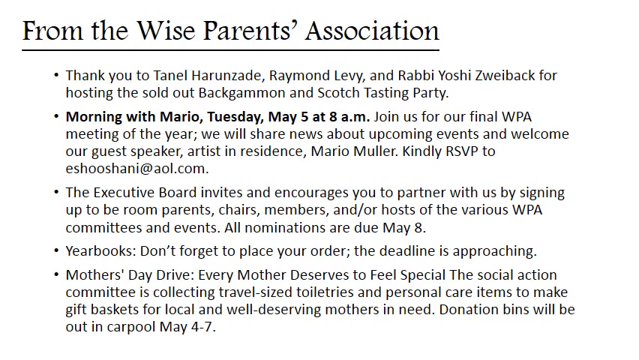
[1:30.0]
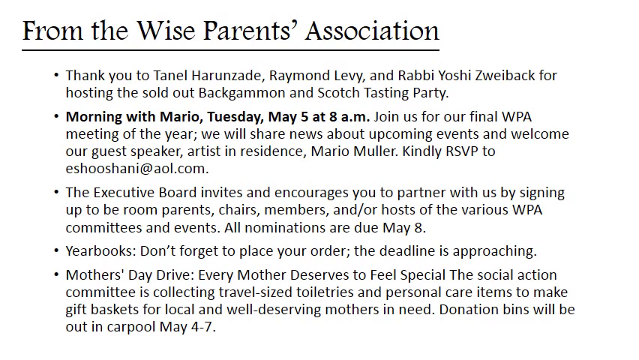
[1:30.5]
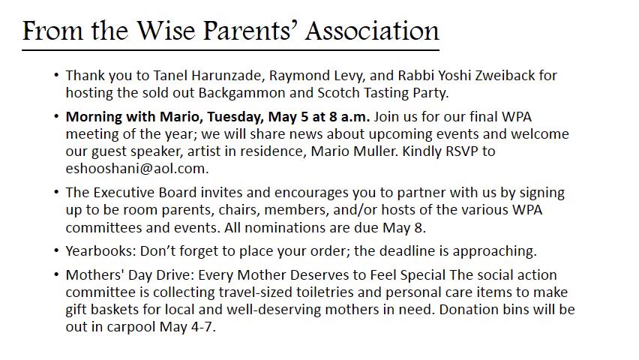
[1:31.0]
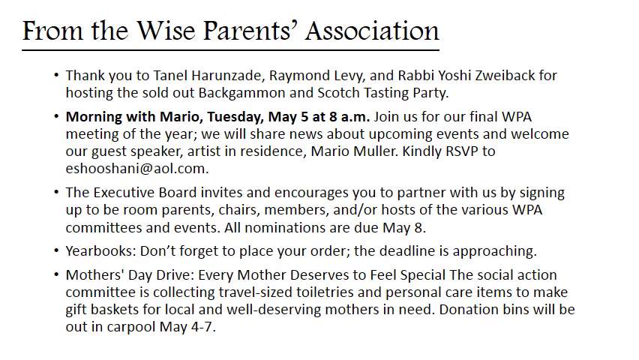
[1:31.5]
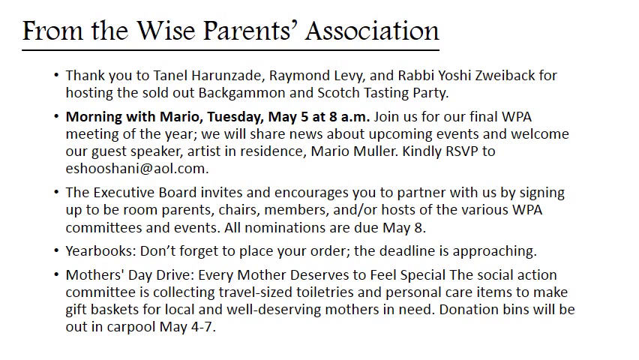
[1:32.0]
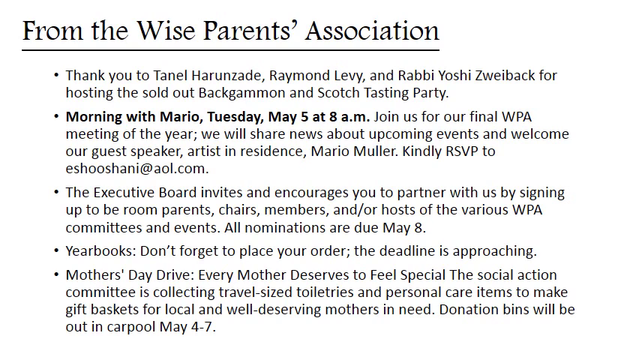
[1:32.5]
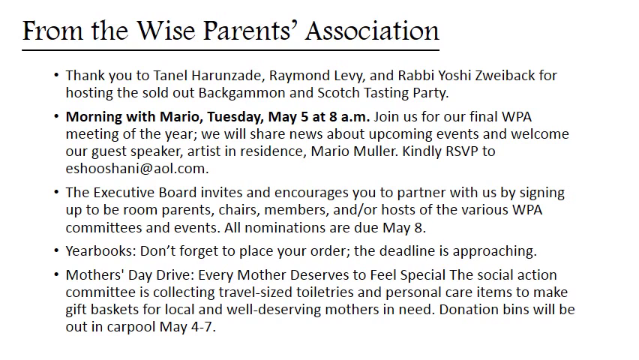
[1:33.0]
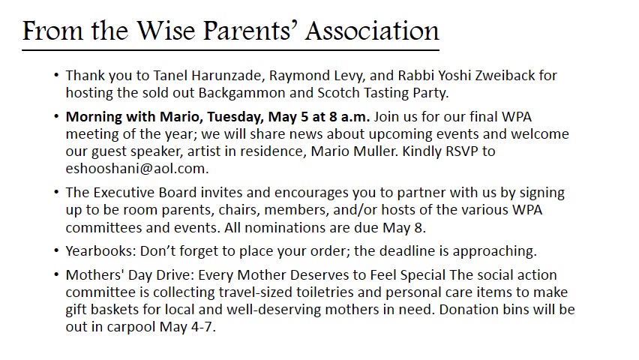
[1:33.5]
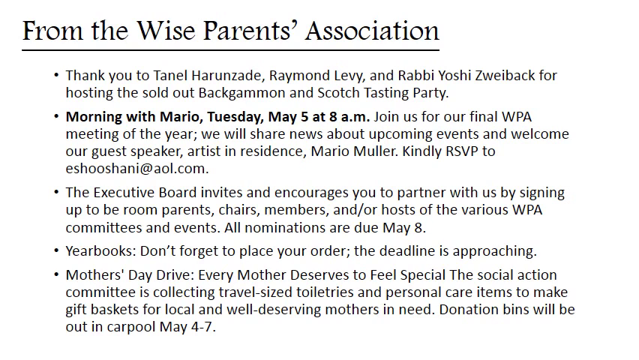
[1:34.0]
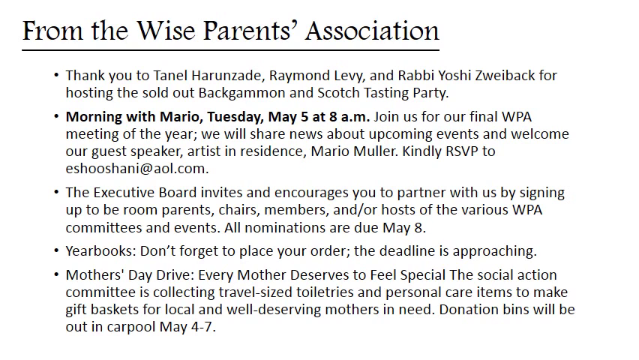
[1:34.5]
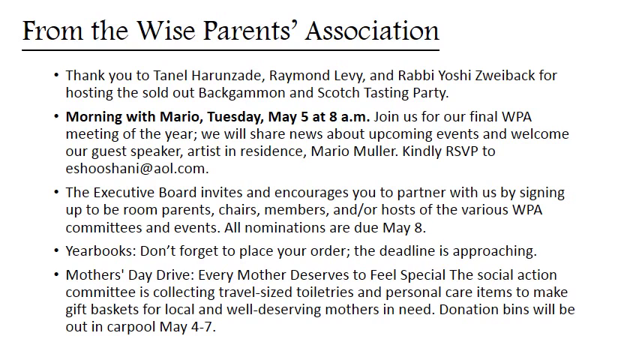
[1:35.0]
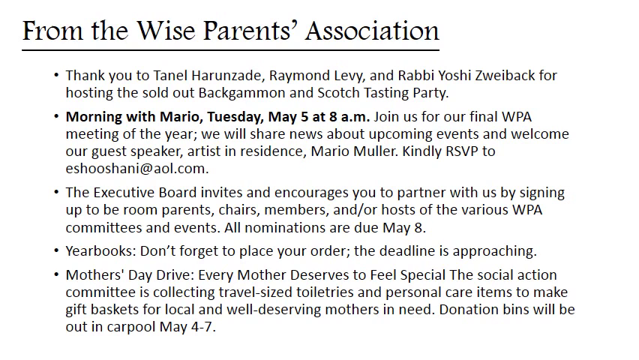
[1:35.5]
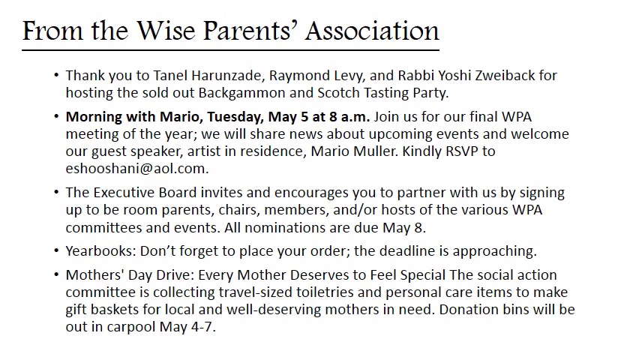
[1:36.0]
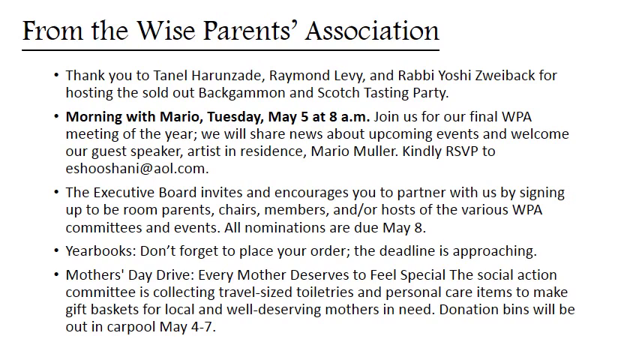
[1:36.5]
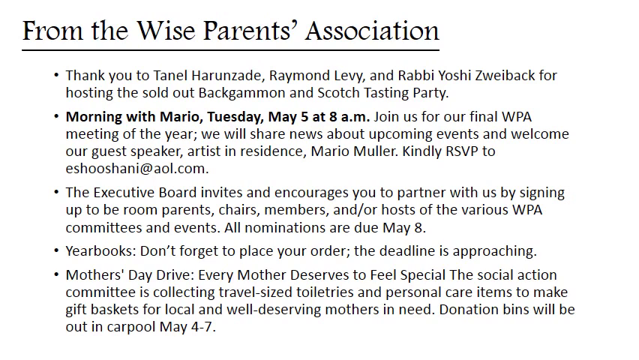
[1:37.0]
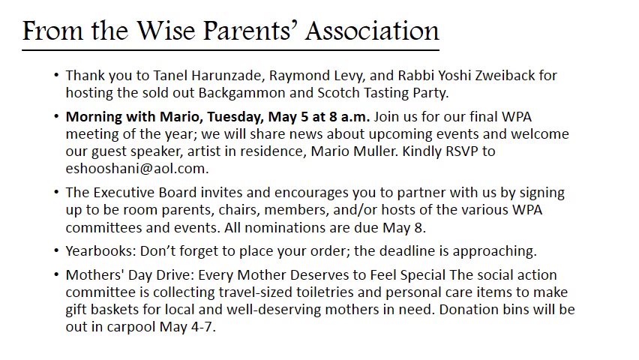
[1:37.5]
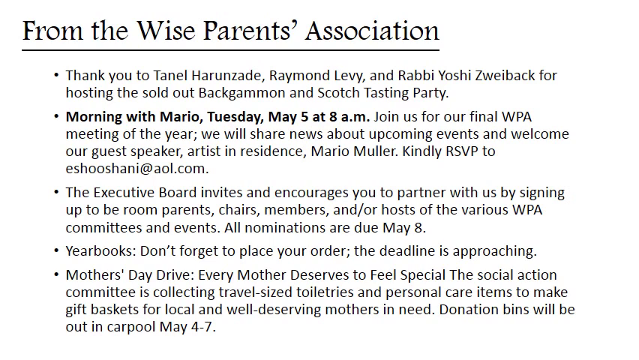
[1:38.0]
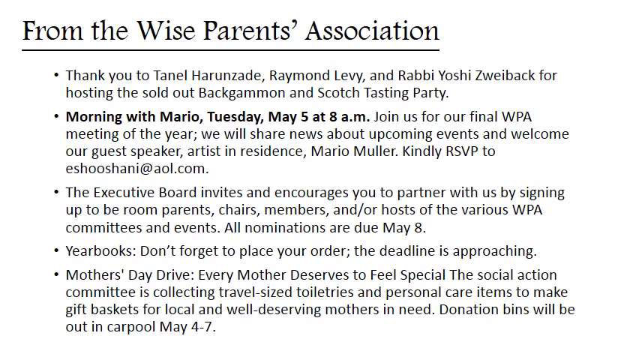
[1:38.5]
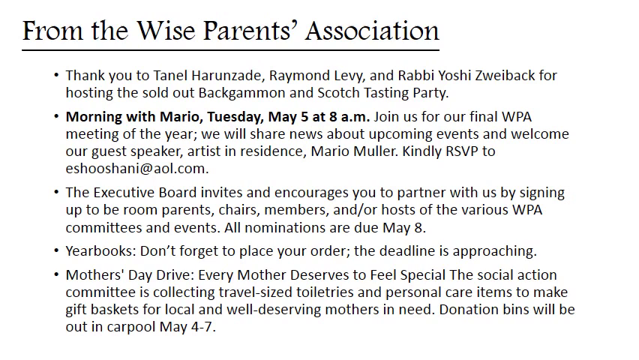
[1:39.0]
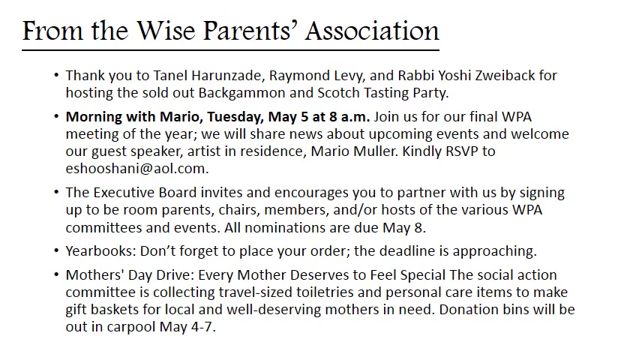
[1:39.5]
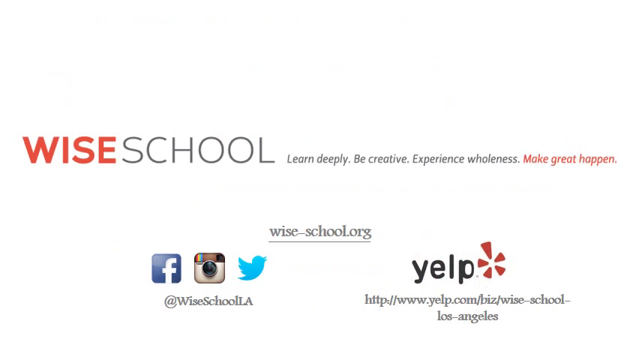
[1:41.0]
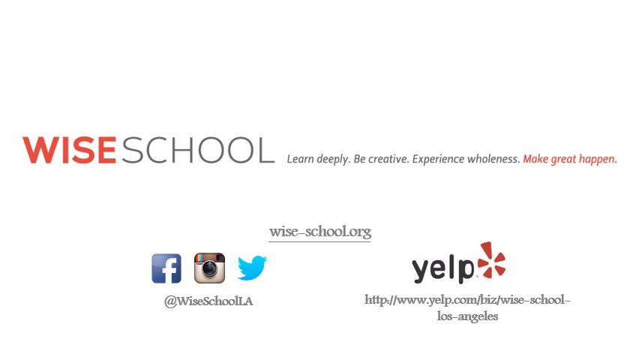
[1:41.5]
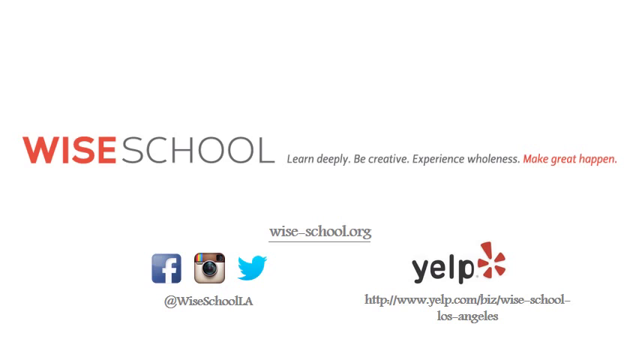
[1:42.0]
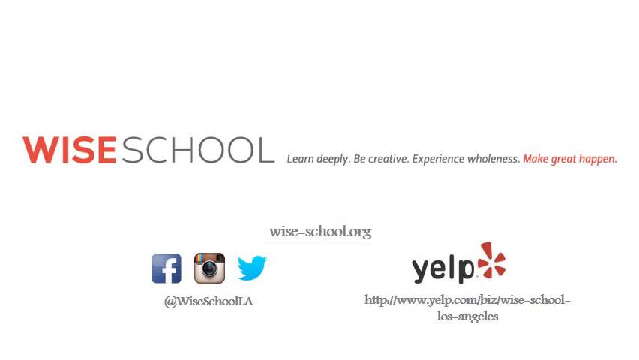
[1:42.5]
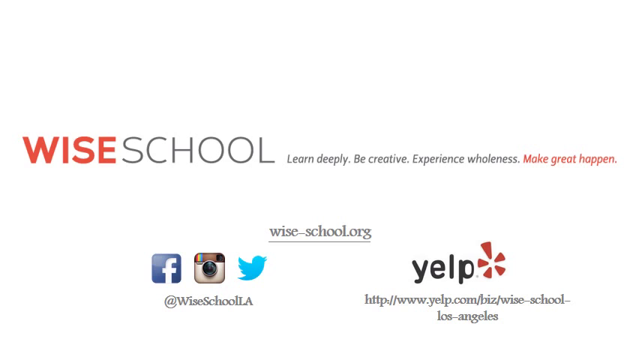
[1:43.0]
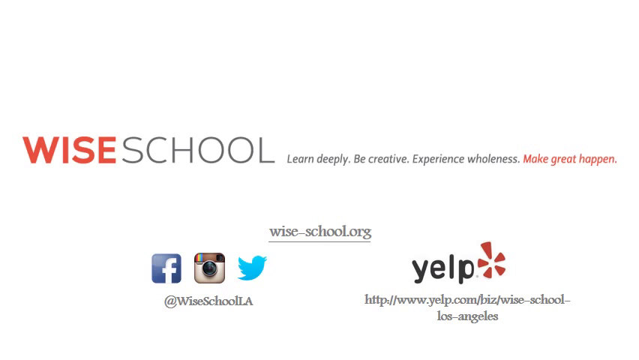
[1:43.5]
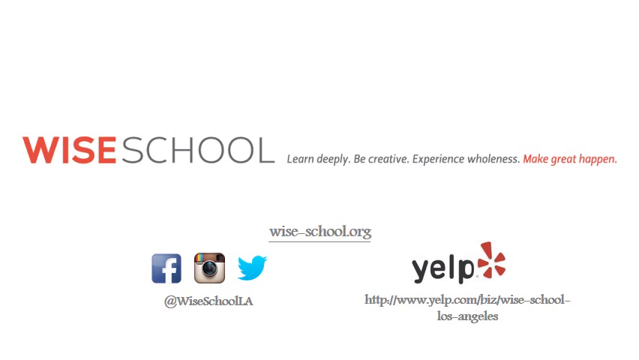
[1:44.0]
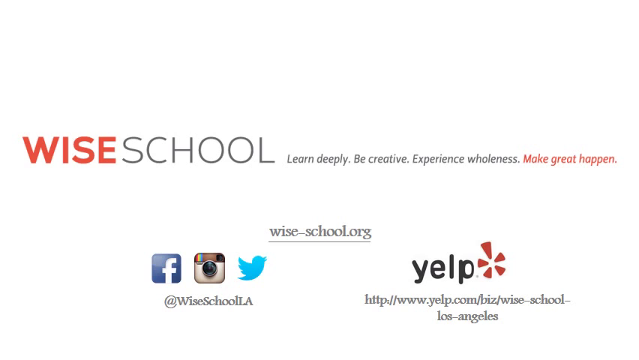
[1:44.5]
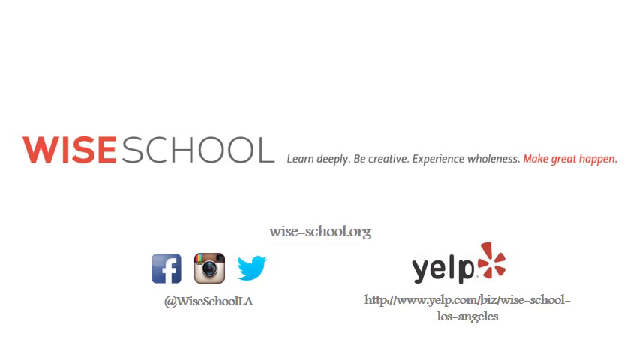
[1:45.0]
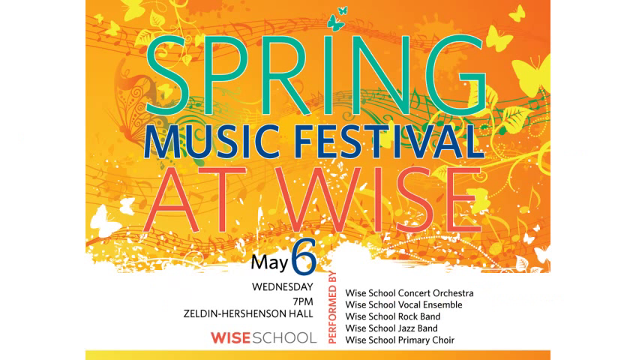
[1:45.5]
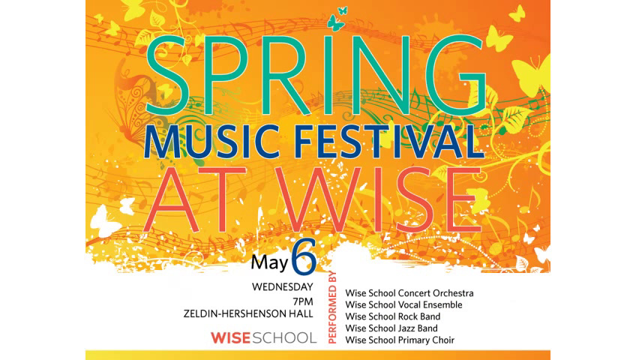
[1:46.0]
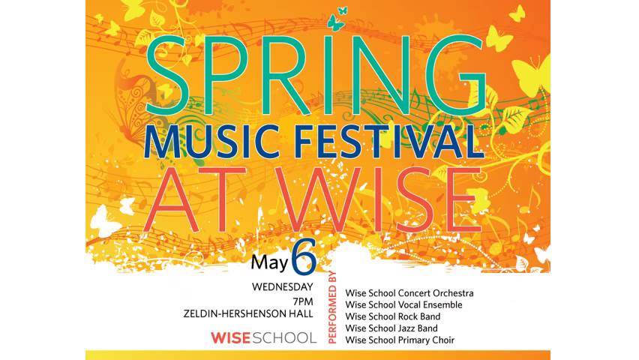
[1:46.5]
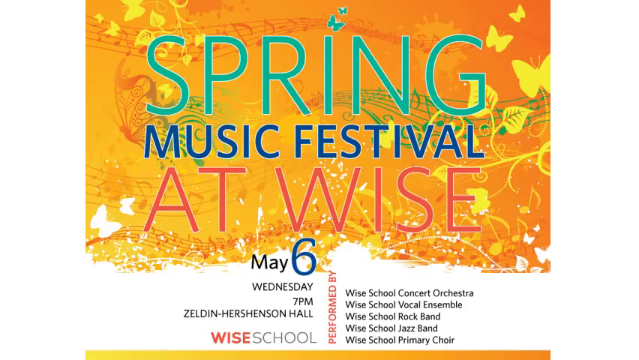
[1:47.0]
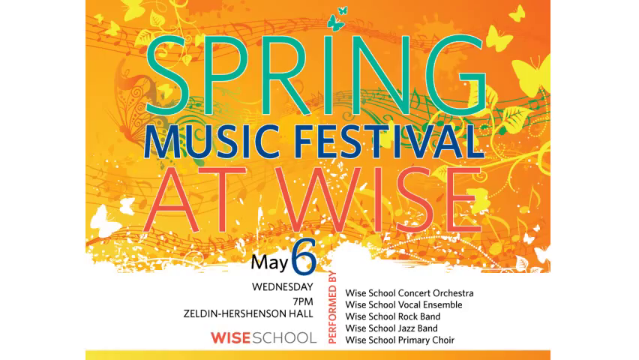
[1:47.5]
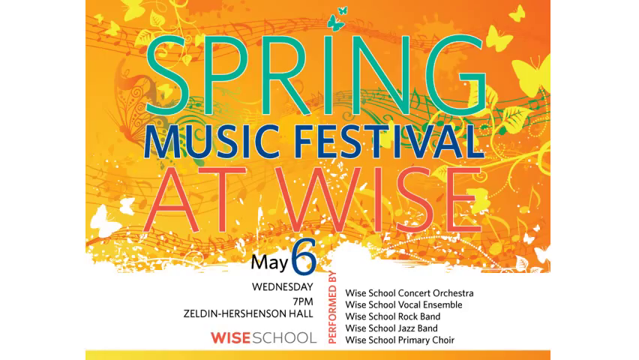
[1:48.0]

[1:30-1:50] At the very top, larger underlined black text reads "from the Wise Parents Association." Below it are five bullet points. The first reads "thank you to Tanel Harunzade, Raymond Levy and Rabbi Yoshi Zweibach for hosting the sold out backgammon and scotch tasting party." The second reads "morning with Mario, Tuesday, May 5th at 8 a.m. Join us for our final WPA meeting of the year. We will share news about upcoming events and welcome our guest speaker, artist in residence Mario Muller. Kindly RSVP to," followed by an email address. The third reads "the executive board invites and encourages you to partner with us by signing up to be room parents, chairs, members and or hosts of the various WPA committees and events. All nominations are due May 8th." The fourth reads "yearbooks. Don't forget to place your order. The deadline is approaching." The last reads "Mother's Day drive. Every mother deserves to feel special. The social action committee is collecting travel size toiletries and personal care items to gift baskets for local well-deserving mothers in need. Donation bins will be out in carpool May 4 through 7."